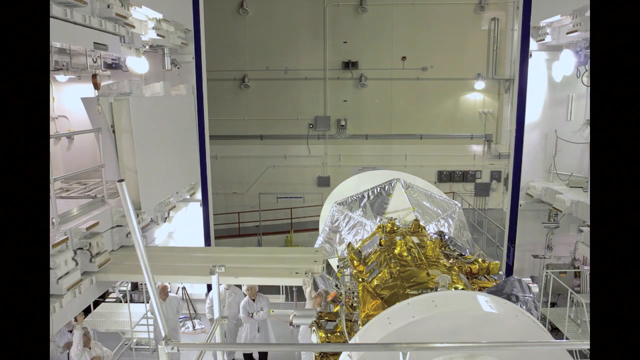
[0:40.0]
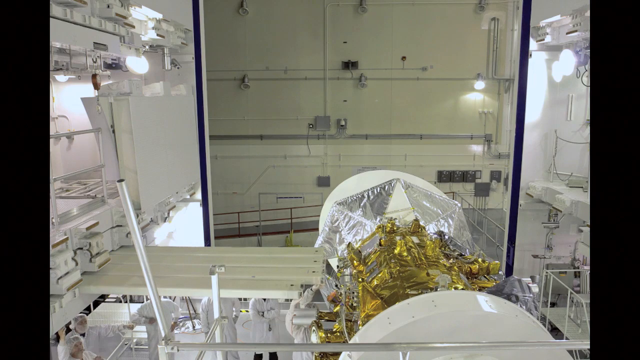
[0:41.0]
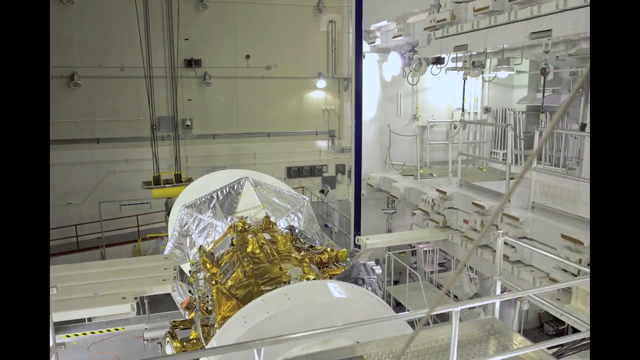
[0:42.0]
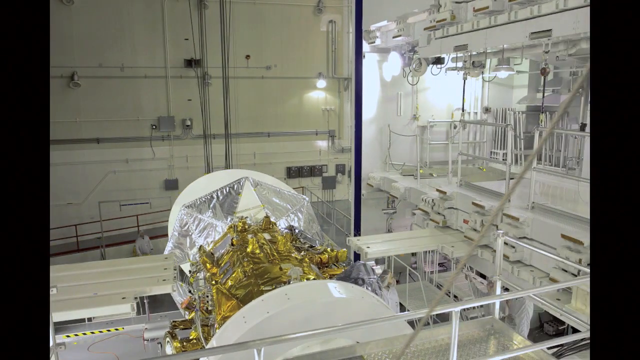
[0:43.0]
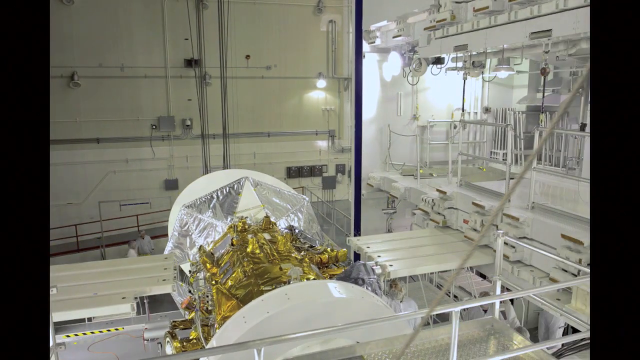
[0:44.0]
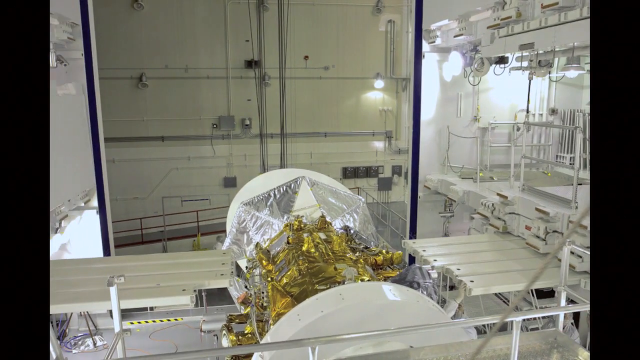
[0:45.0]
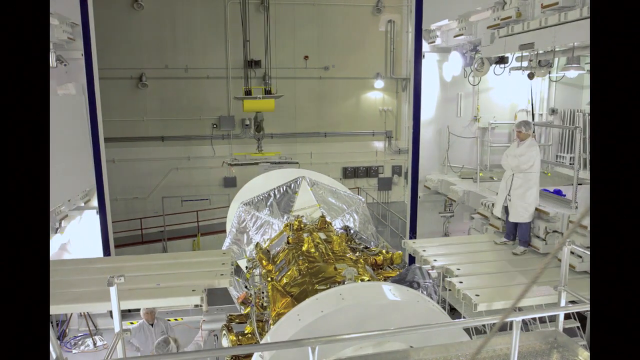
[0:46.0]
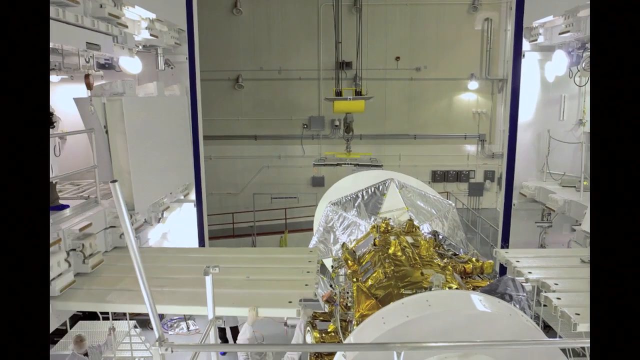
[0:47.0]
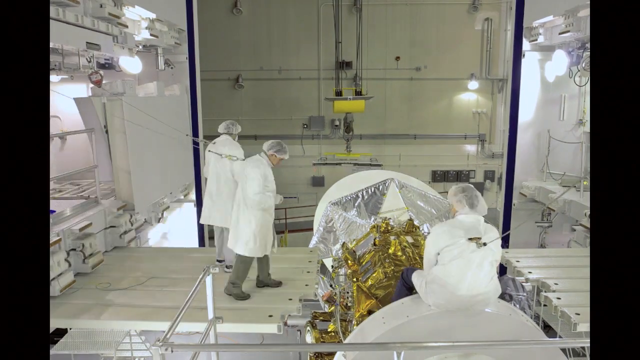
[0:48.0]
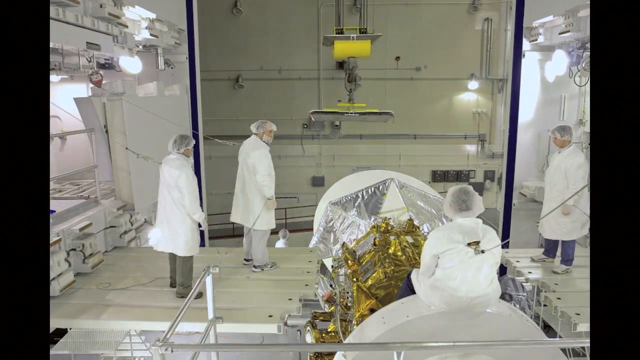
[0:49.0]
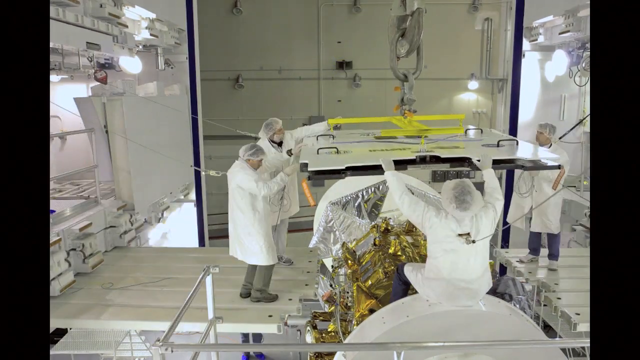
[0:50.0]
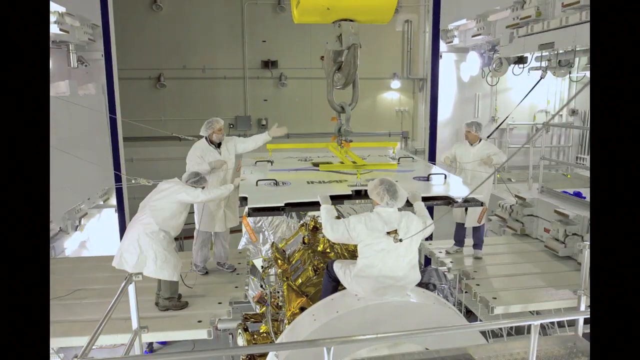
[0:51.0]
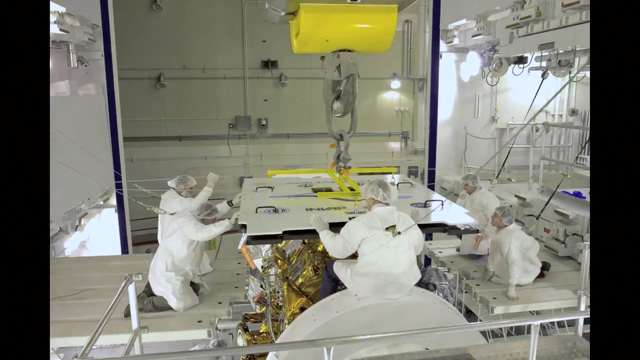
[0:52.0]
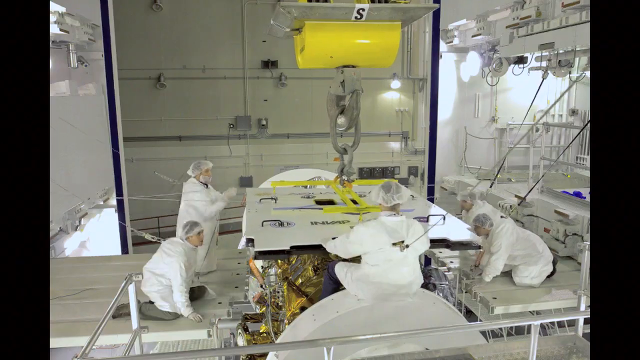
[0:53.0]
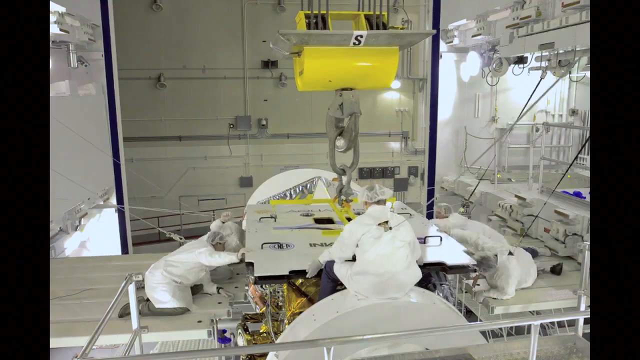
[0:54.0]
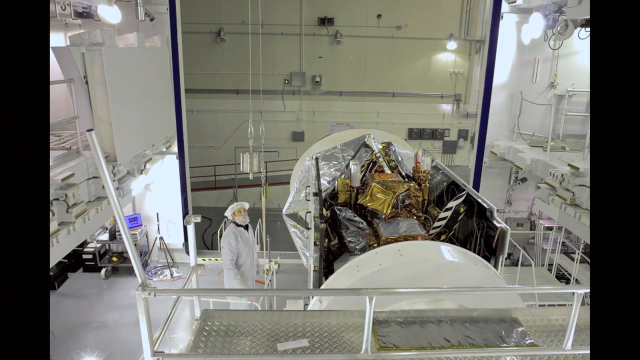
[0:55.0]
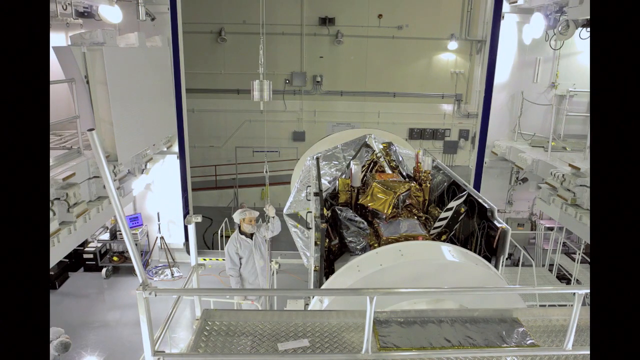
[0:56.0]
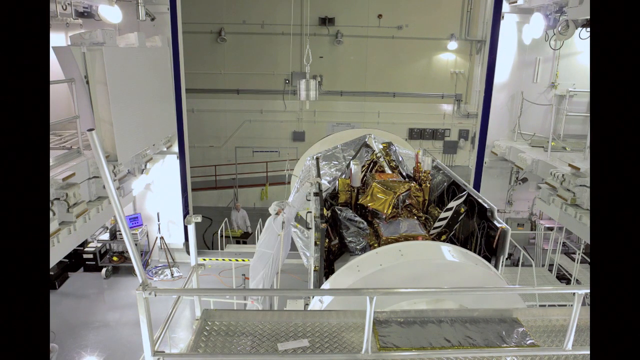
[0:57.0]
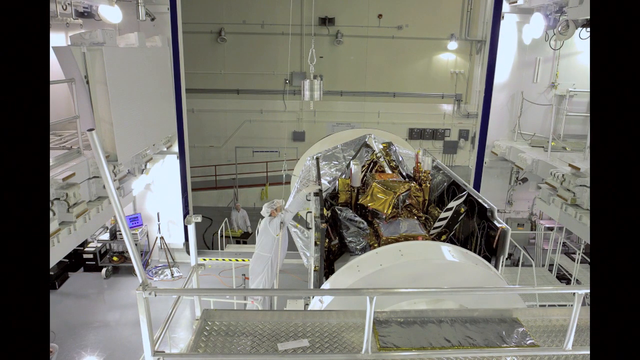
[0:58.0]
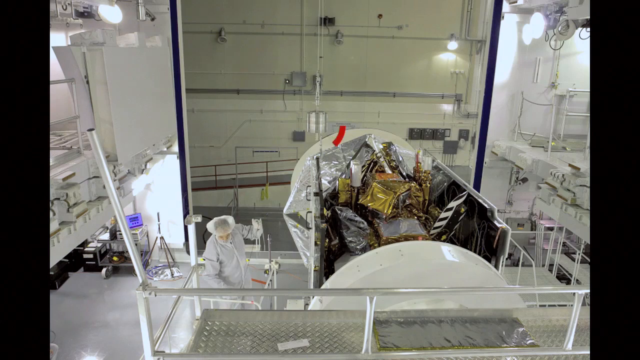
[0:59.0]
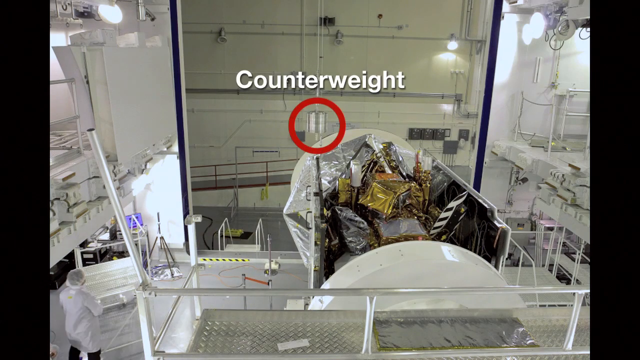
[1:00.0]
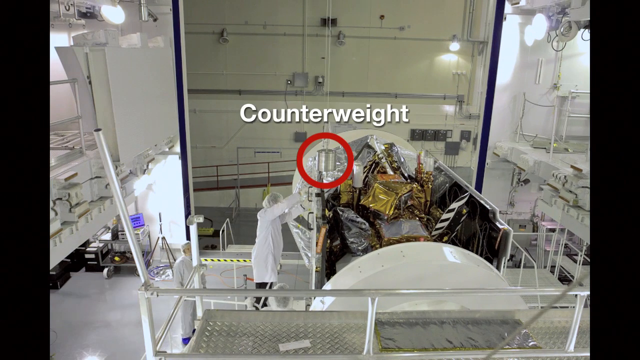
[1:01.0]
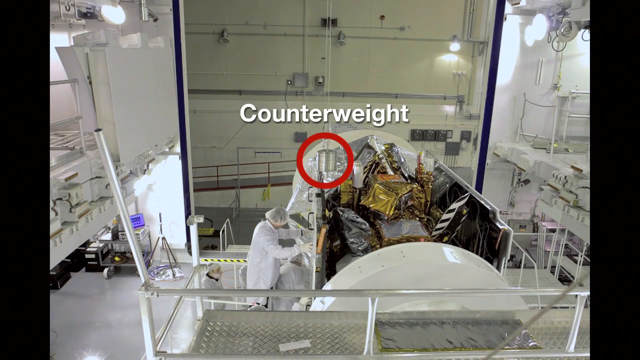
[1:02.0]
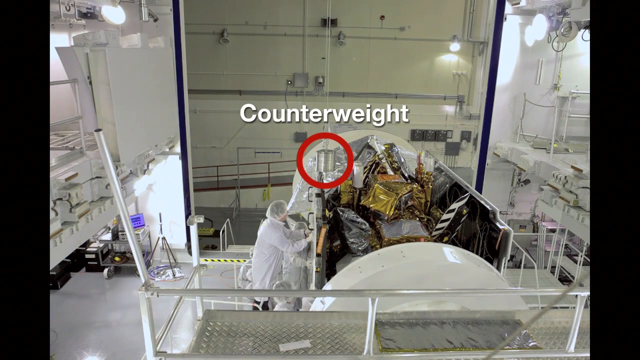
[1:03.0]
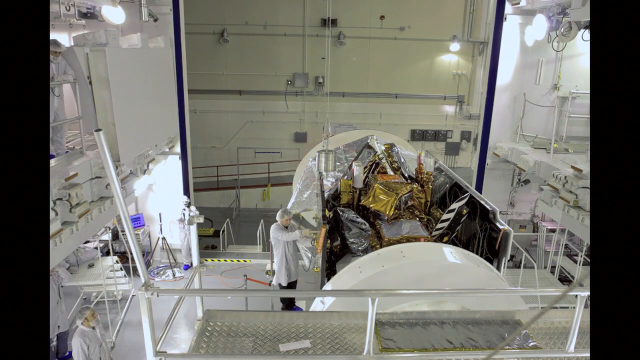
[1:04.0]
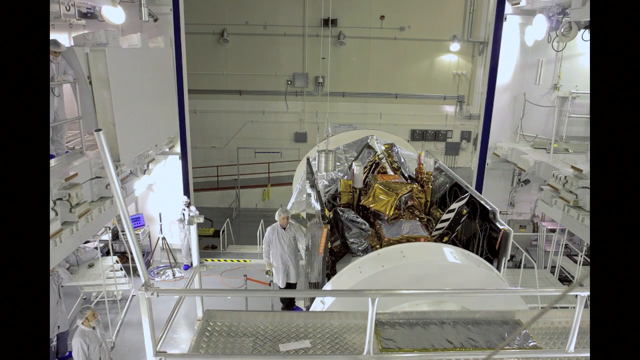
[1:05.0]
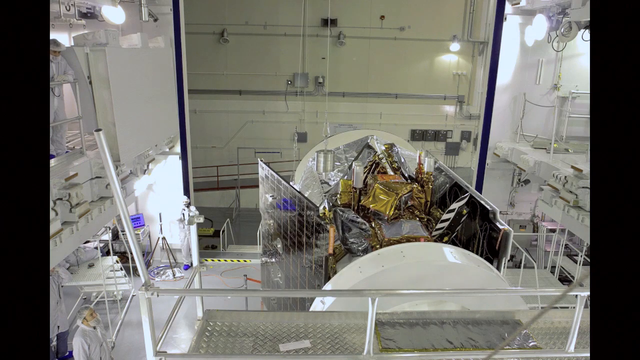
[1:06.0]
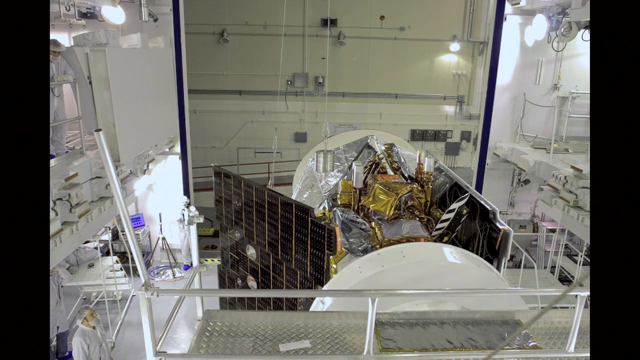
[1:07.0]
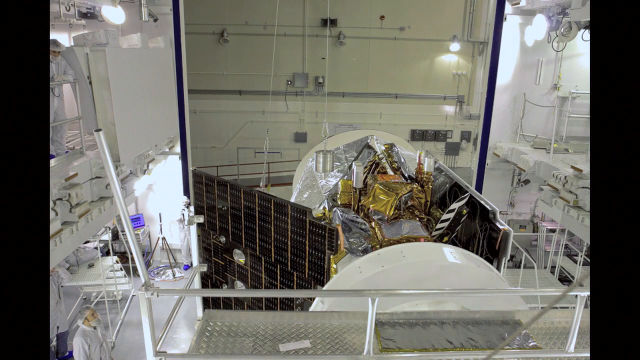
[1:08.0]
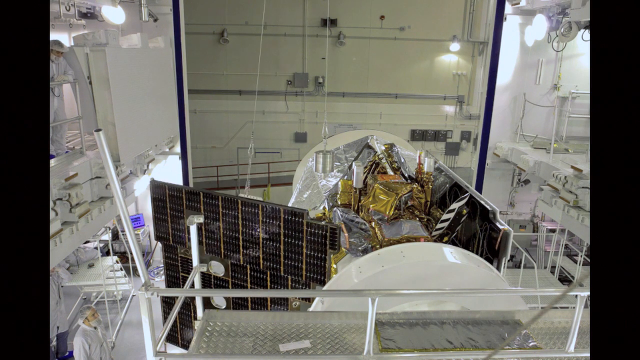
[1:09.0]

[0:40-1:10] People in lab coats stand in a room, apparently working on some sort of equipment. A white shelving unit above them is being made into what looks like a platform, with different sides pulled out one at a time. The people in white lab coats and hairnets then stand on the platforms and seem to be lowering something down over top of the equipment, all holding on to it, while a metal piece lowers it onto the equipment. Each of the people in white lab coats has some sort of jumper cords or string attached to them. A different view then shows another person working on it, and the word "Counterweight" pops up with a red circle on one of the areas. Next comes a view of one of the solar panels opening.